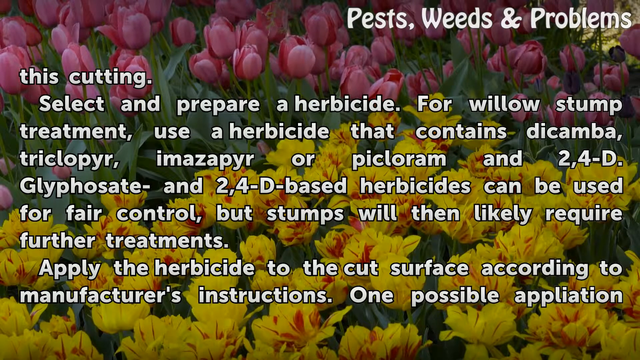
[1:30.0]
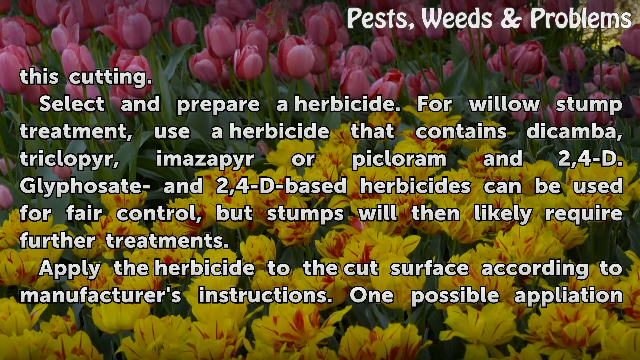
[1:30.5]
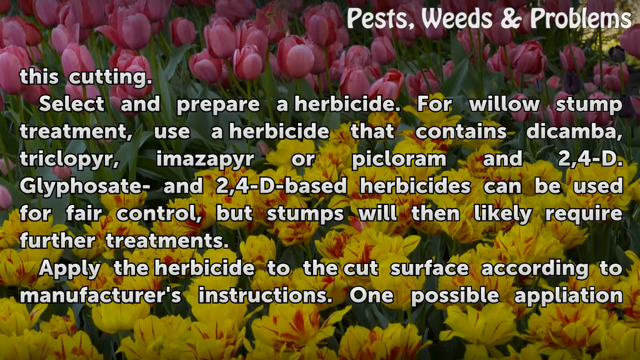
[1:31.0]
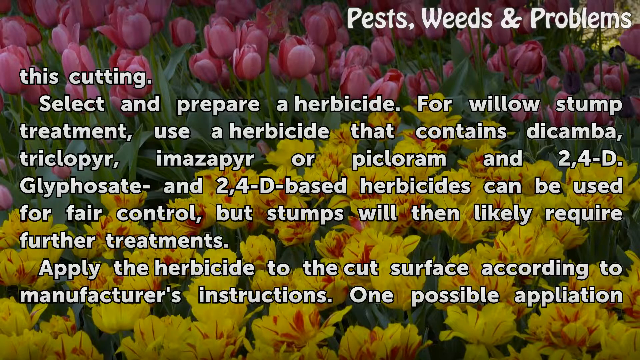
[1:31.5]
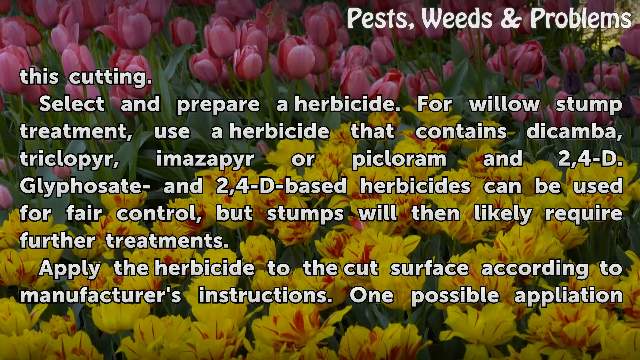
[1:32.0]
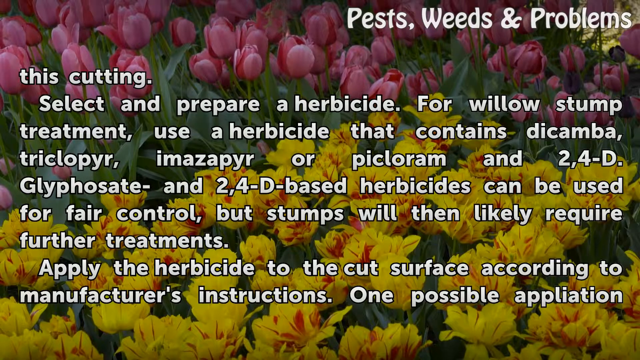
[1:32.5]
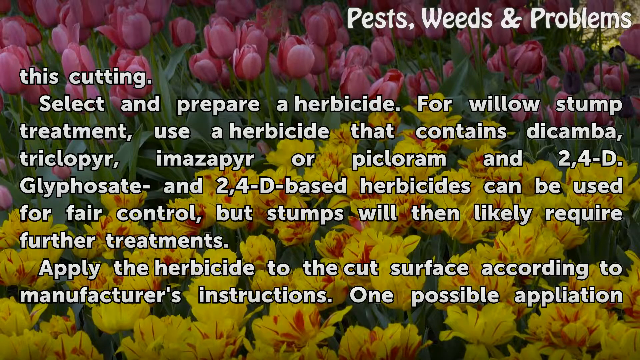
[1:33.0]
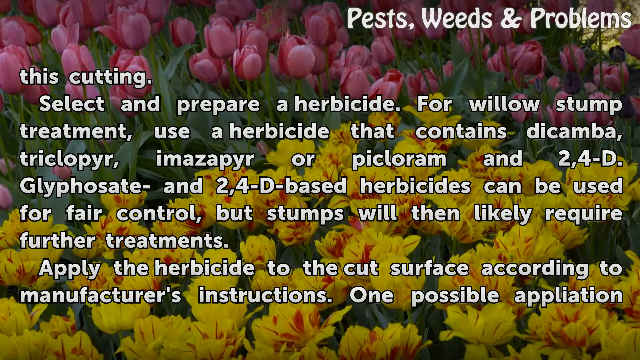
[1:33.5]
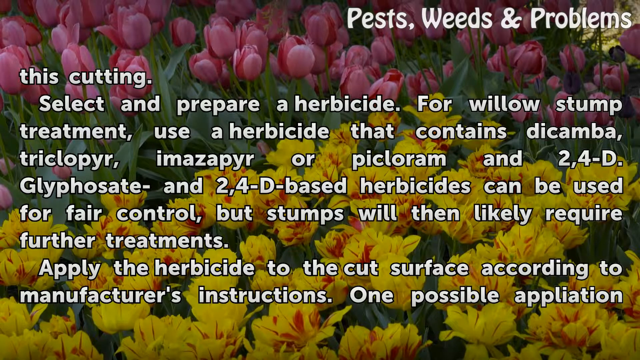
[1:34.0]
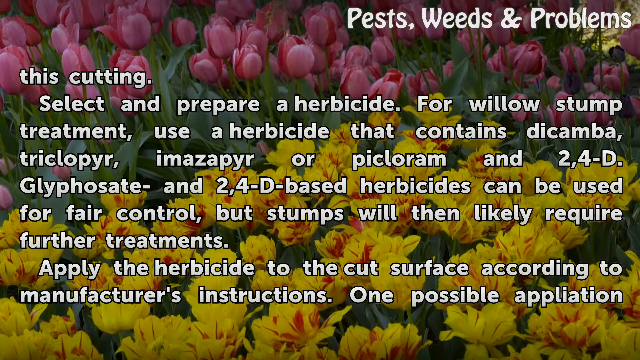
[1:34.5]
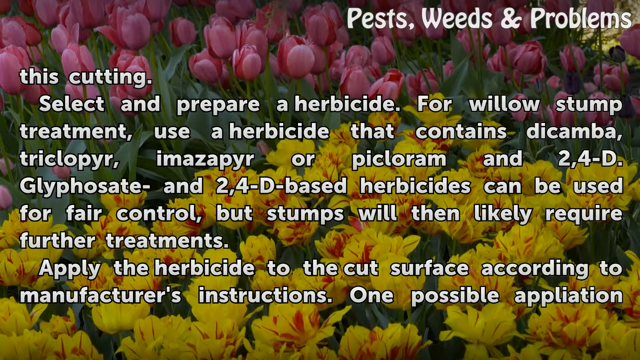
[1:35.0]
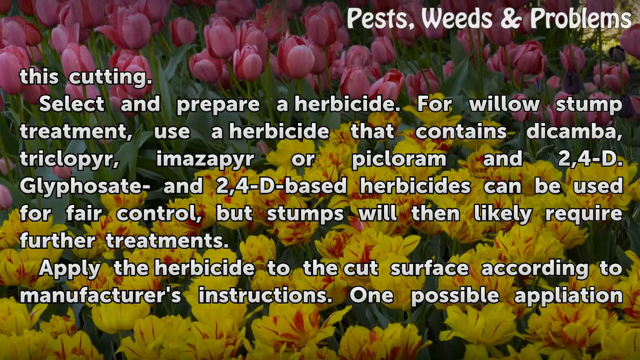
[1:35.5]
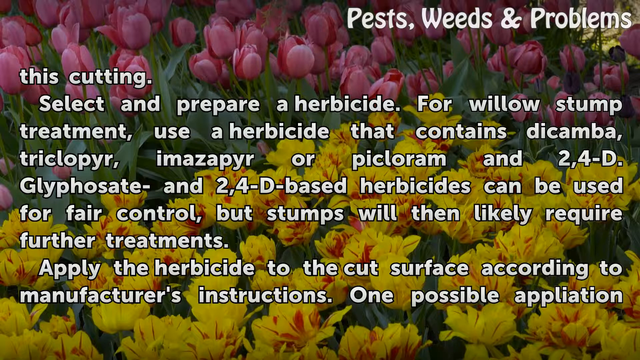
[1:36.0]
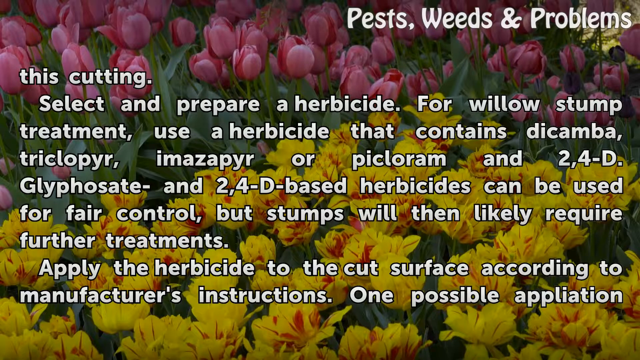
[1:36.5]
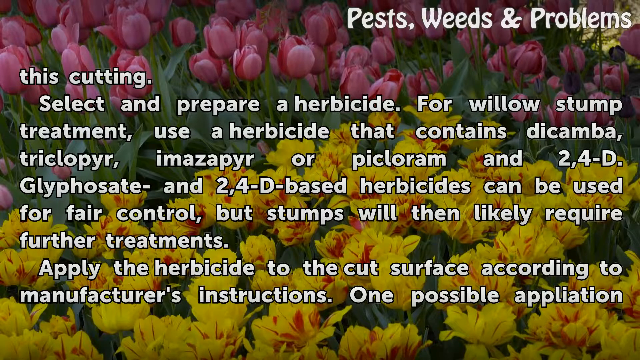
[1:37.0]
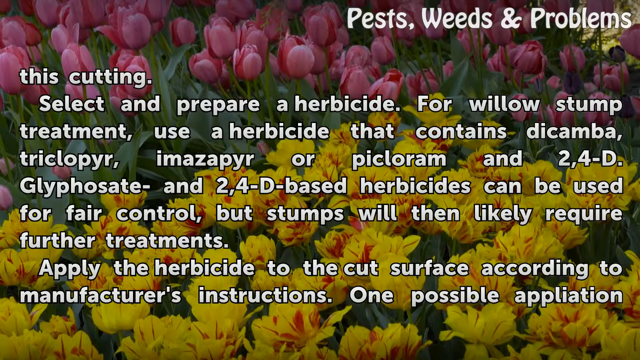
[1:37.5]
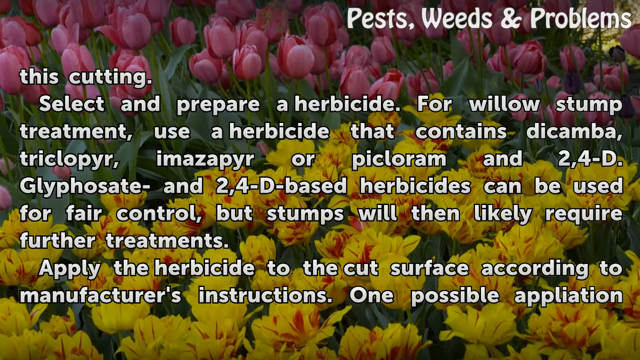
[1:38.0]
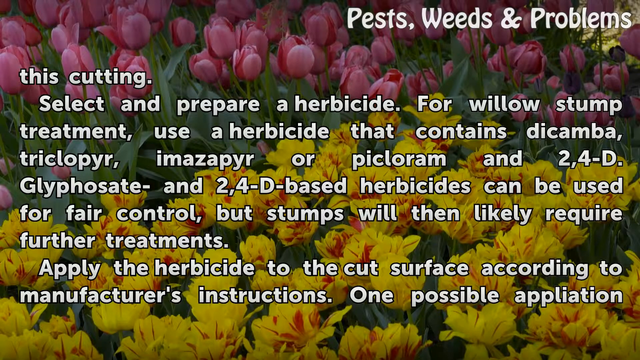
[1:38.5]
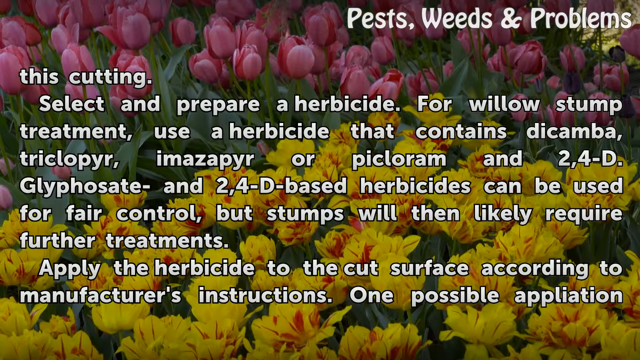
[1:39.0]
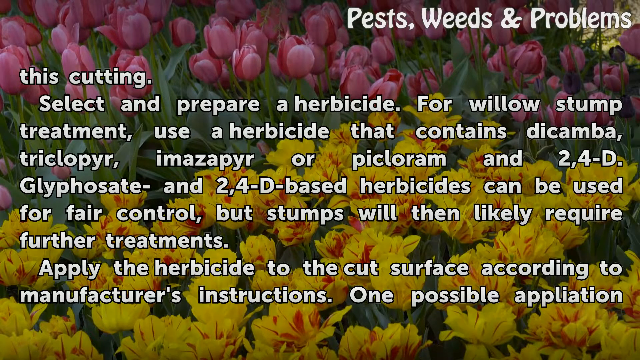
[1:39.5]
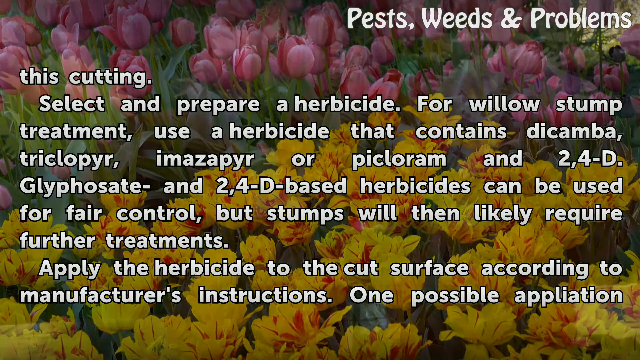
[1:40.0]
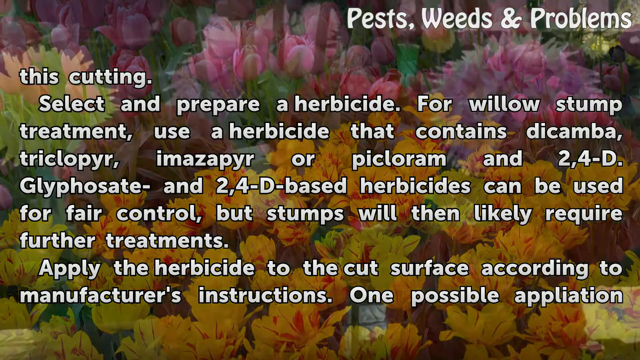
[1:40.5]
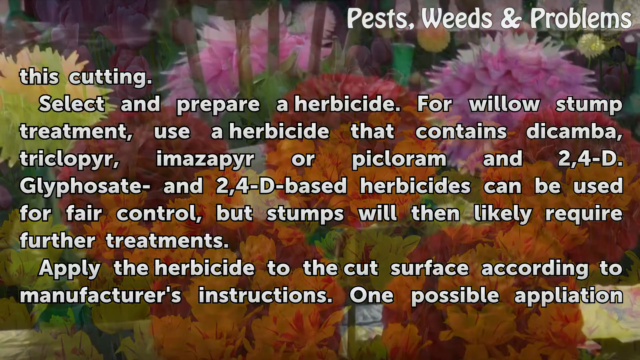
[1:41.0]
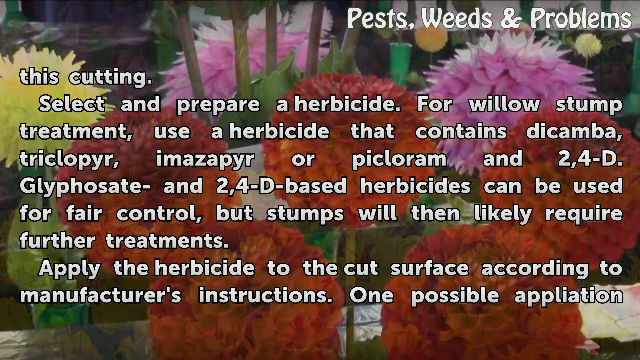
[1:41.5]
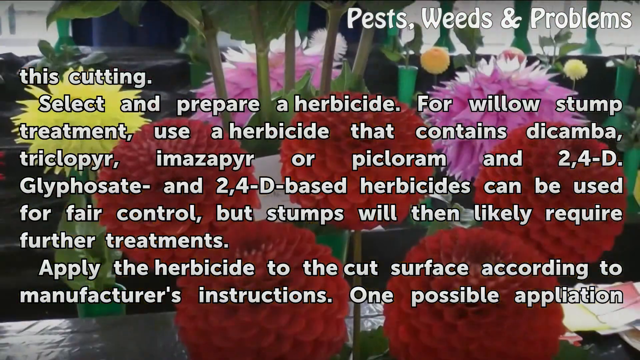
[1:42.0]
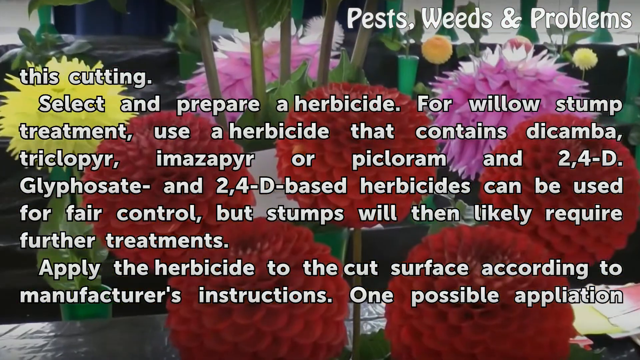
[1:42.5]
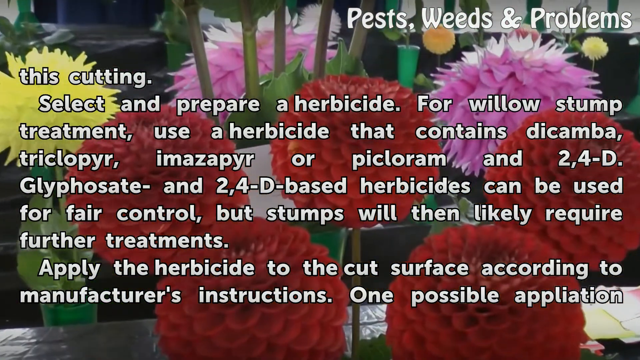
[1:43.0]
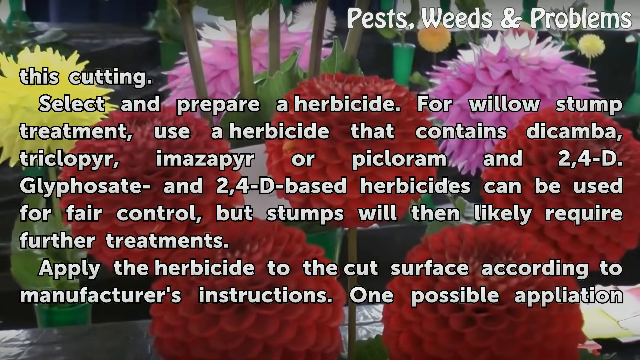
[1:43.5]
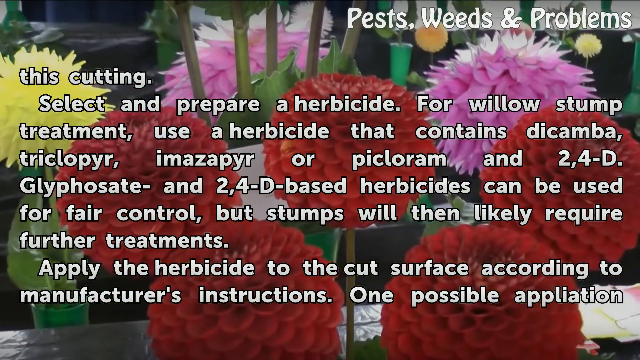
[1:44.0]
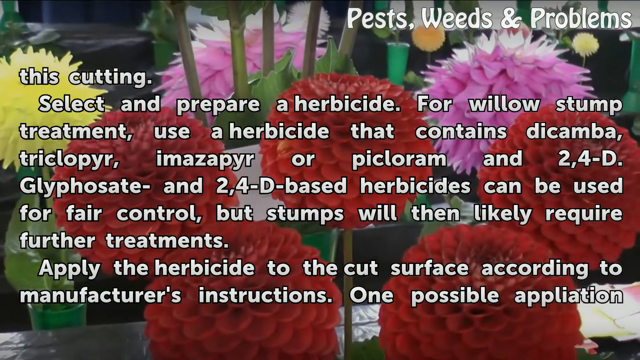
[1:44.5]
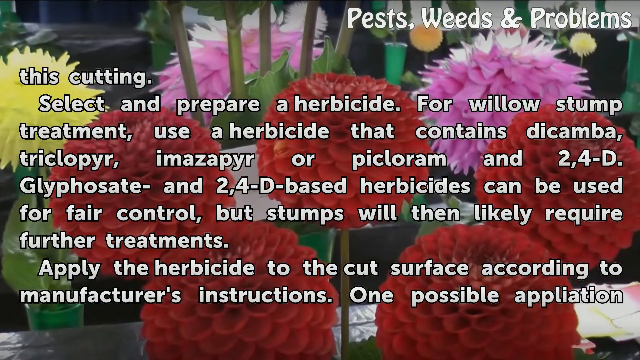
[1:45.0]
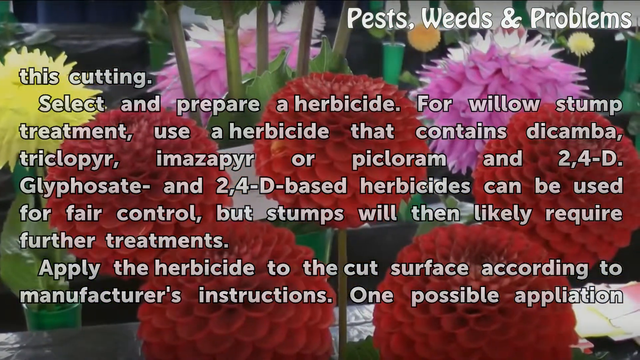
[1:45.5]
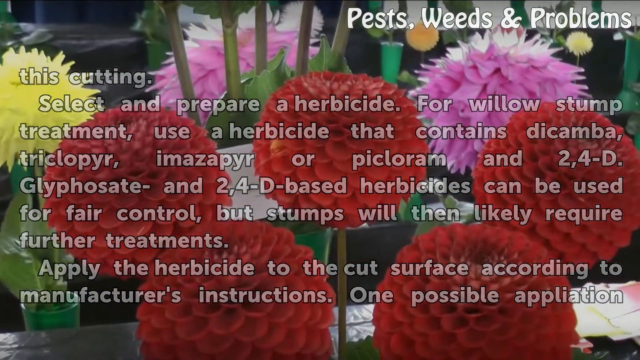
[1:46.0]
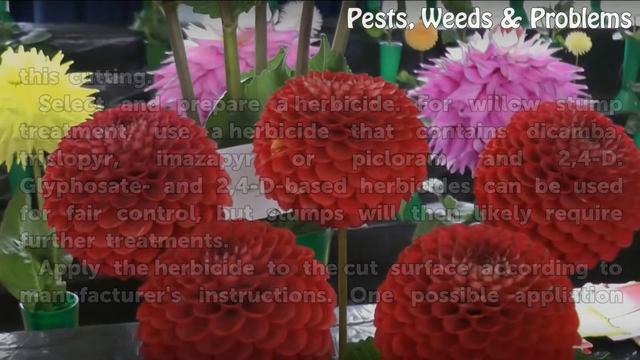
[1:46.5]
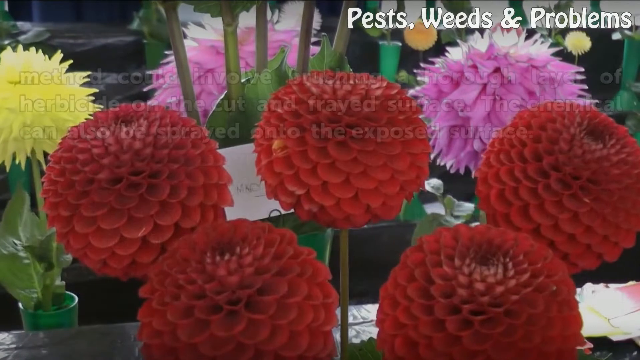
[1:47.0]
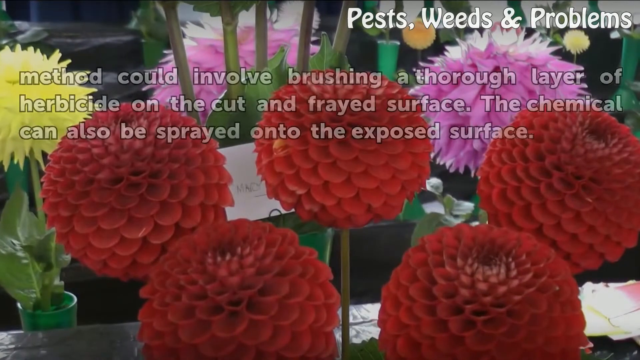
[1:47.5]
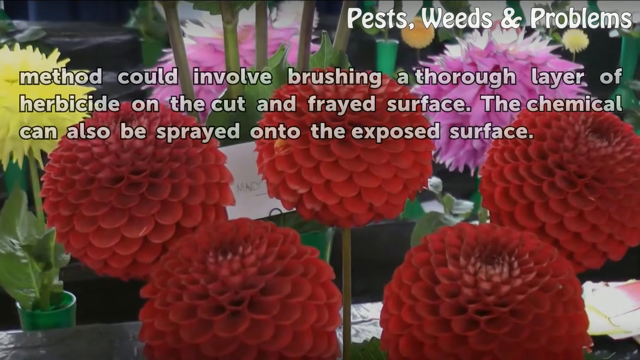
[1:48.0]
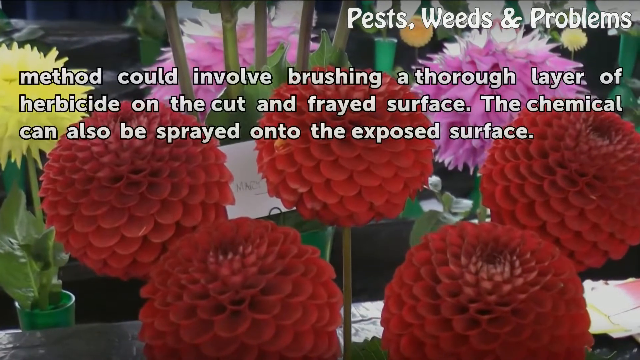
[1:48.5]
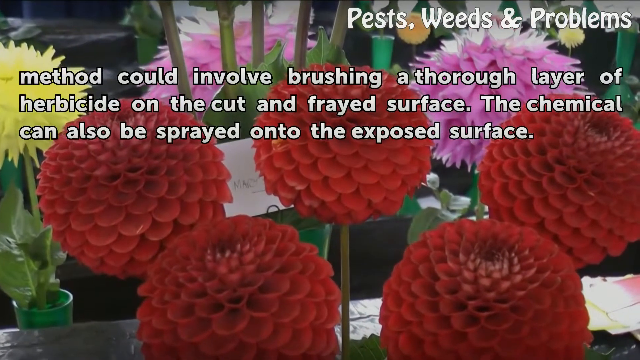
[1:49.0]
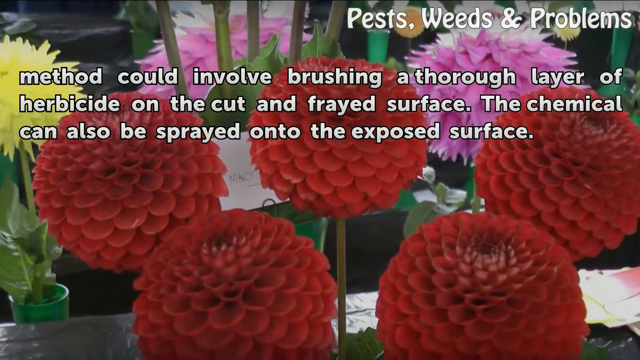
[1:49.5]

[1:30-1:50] Pink flowers fill the top of the background and mostly yellow flowers are at the bottom, some with a little red or orange color. In white font, text reads "this cutting." The next paragraph reads "select and prepare a herbicide for willow stump treatment. Use a herbicide that contains dicamba, triclopyr, imazapyr, or picloram, and 2,4-D." It continues that glyphosate and 2,4-D-based herbicides can be used, "but stumps would then likely require further treatments." The next paragraph reads "apply the herbicide to the cut surface according to the manufacturer's instructions. One possible application method could involve brushing a thorough layer of herbicide on the cut and frayed surface, the chemical can also be sprayed on the exposed surface."